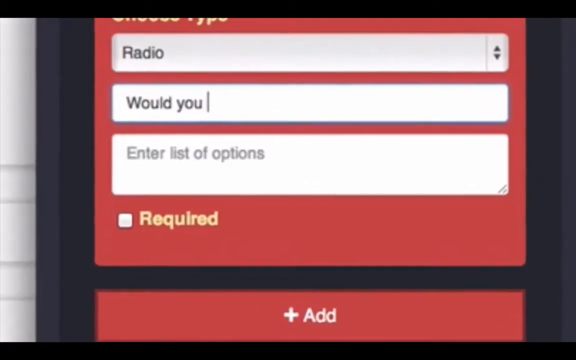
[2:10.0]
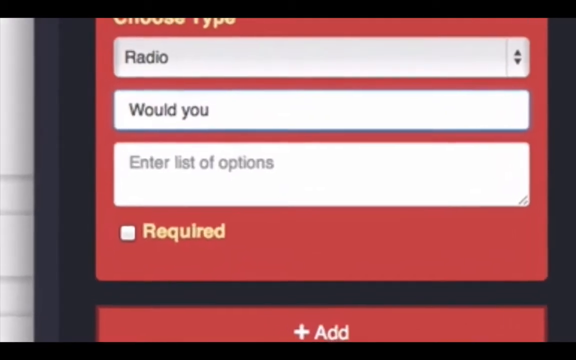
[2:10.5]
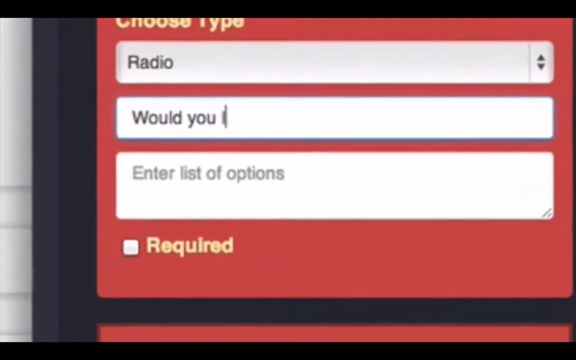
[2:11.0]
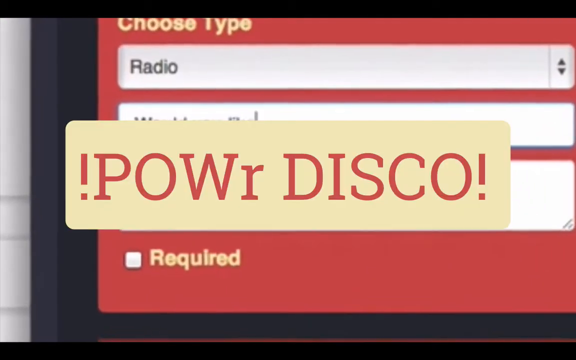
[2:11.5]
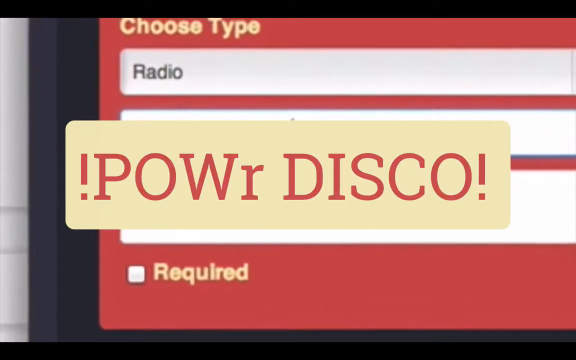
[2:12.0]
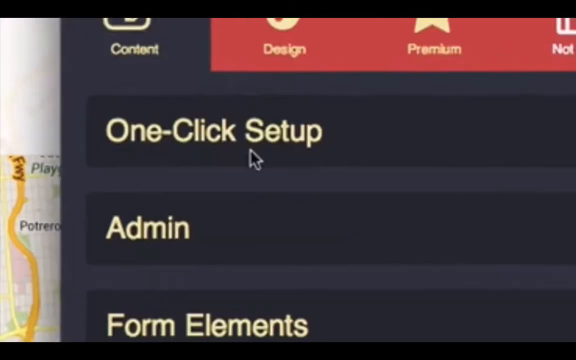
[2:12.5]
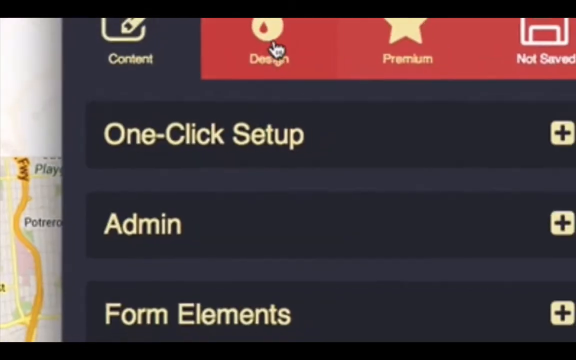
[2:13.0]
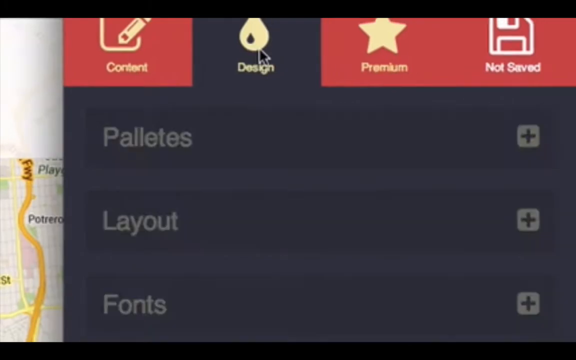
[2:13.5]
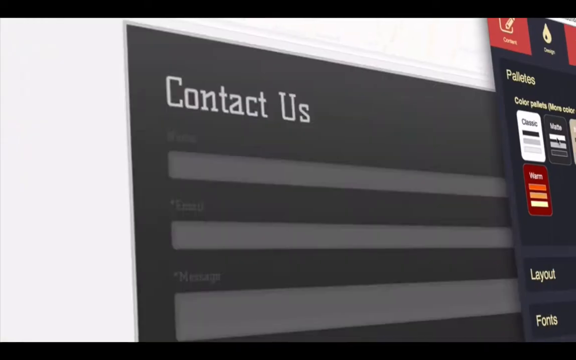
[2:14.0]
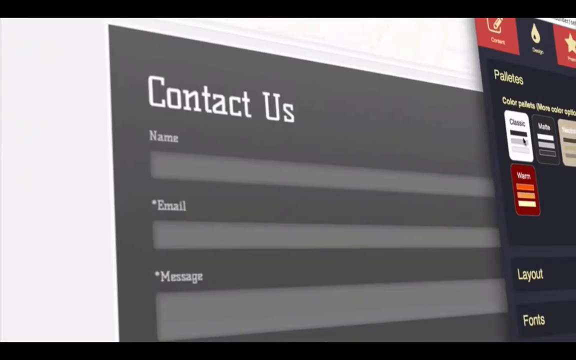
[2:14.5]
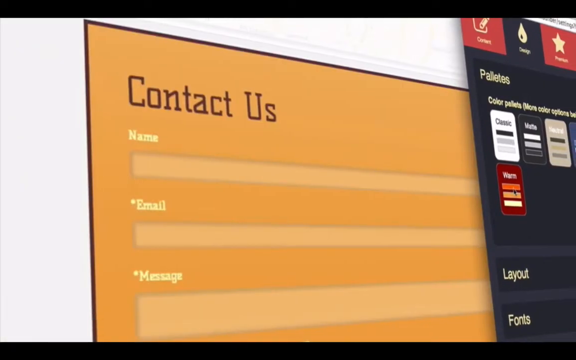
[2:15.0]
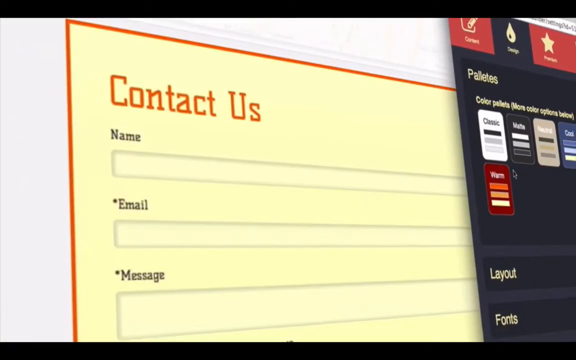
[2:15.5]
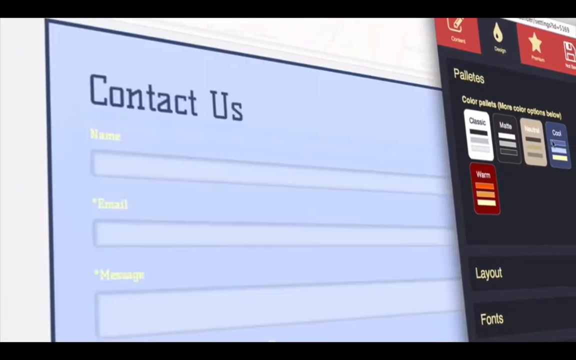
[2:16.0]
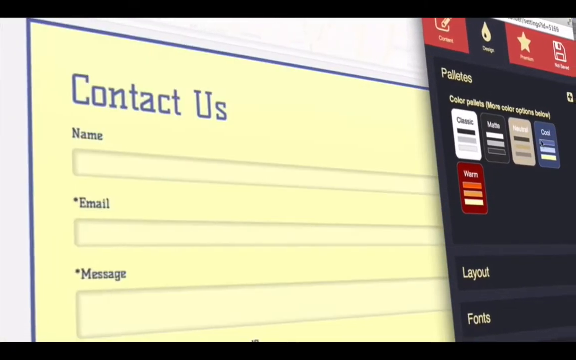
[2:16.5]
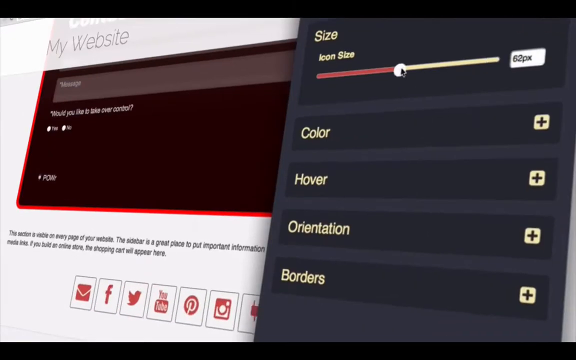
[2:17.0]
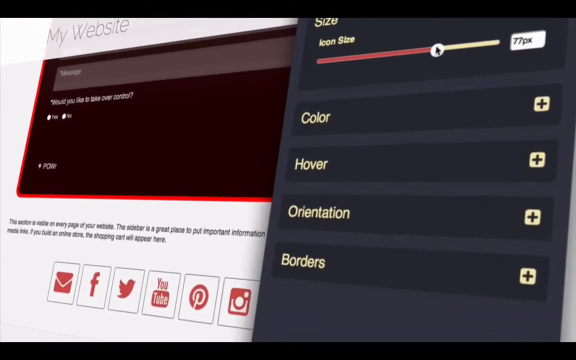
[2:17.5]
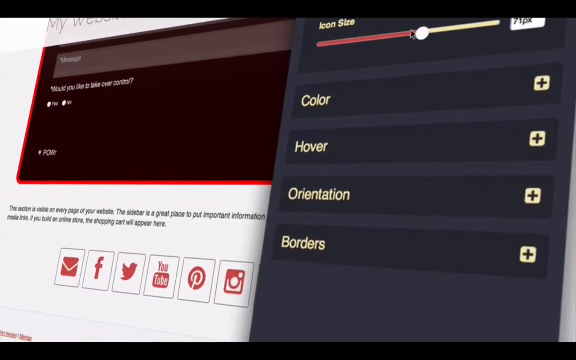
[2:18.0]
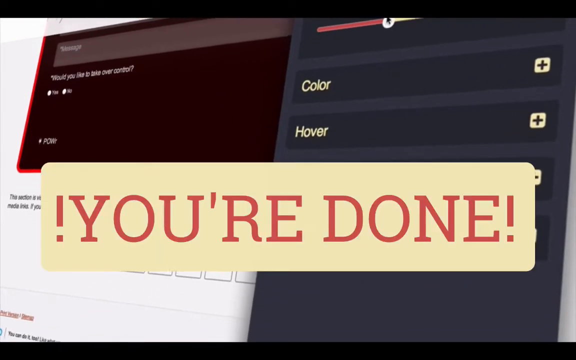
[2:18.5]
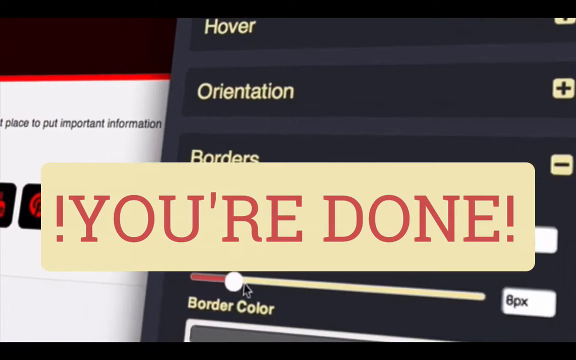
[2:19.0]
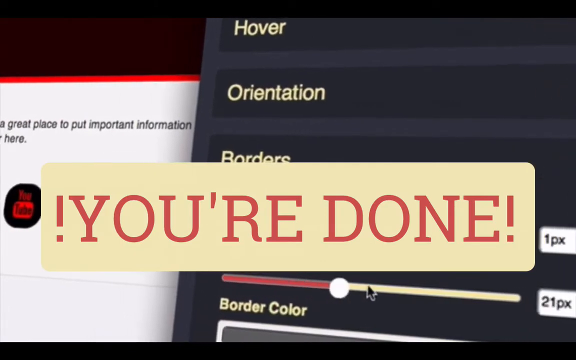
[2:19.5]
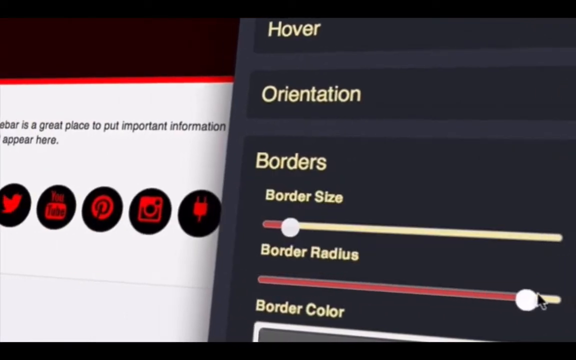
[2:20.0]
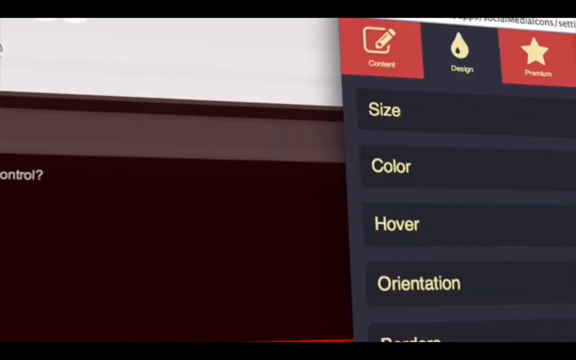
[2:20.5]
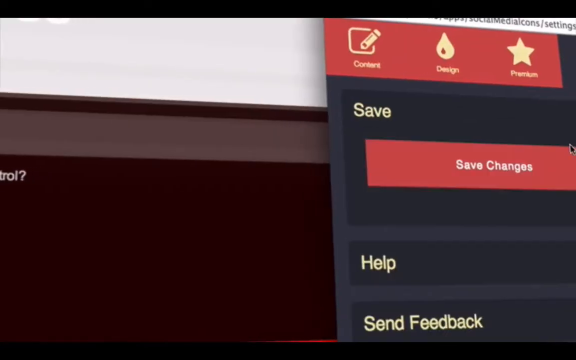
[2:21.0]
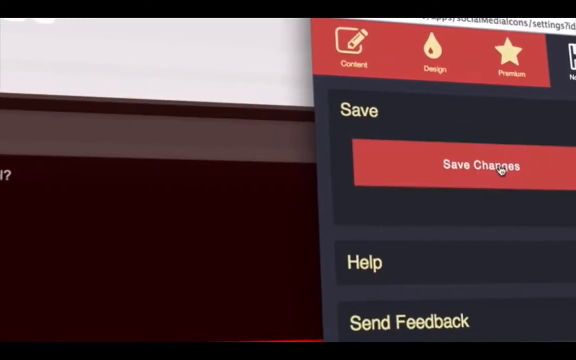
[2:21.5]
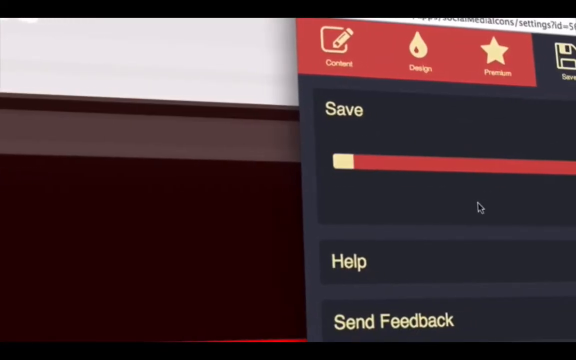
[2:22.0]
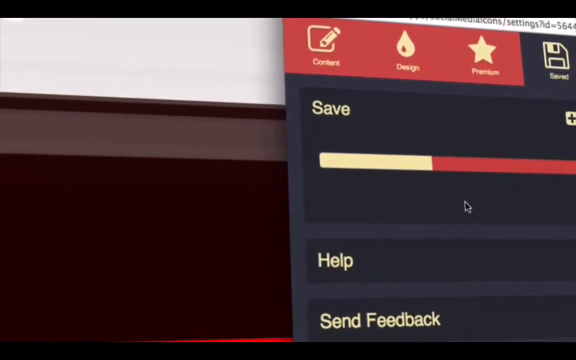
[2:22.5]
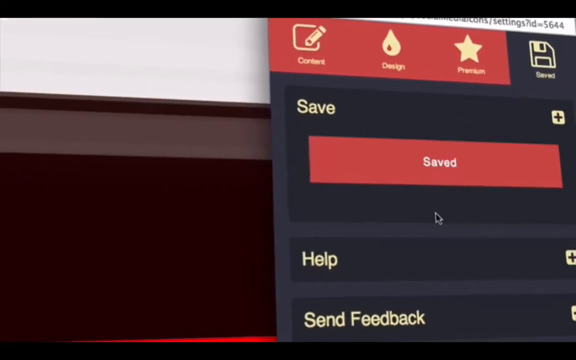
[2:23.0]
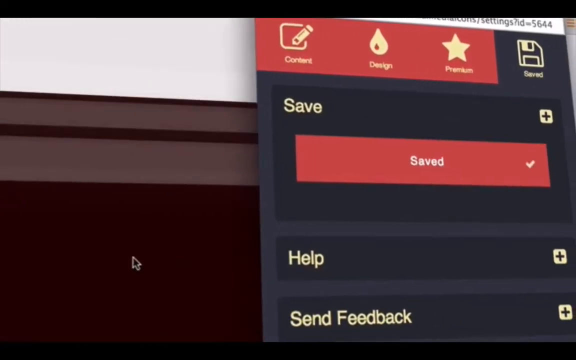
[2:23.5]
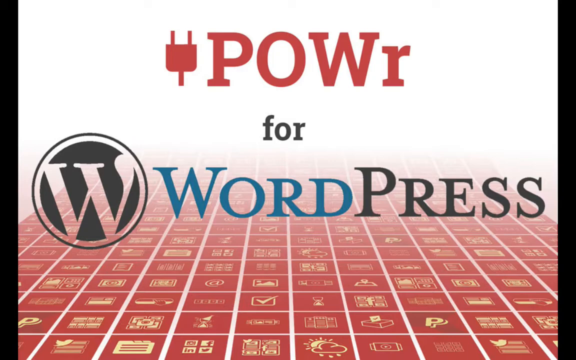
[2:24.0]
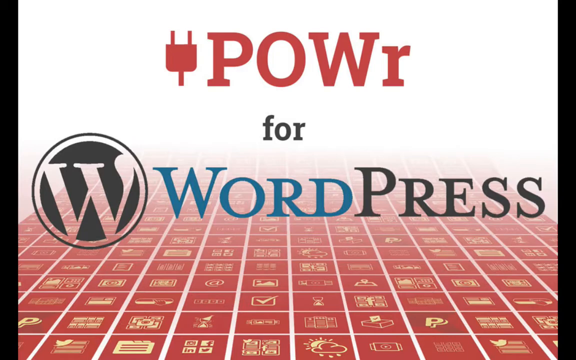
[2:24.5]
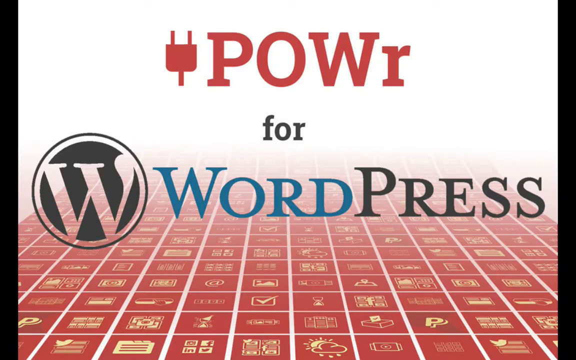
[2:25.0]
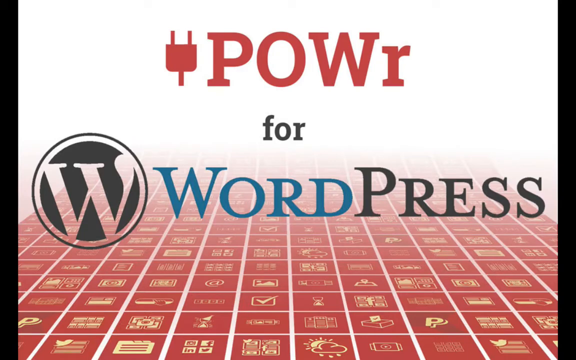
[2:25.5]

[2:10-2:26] Zoomed in on the part that says "Choose Type", the person selects radio and types "would you like". Then big red text on a yellow background across the screen says "Power Disco". The person clicks various other things such as design, changing the color palettes from blue to yellow to red, and tweaking the icon sizes, which makes the icons on the left-hand side go bigger and smaller. Large red text on a yellow background then says "you're done", with exclamation marks at either end. The person continues tweaking the design and content options, then clicks Save Changes. A yellow bar goes across the screen and the outro screen appears, the same as the intro: the Power plug socket logo at the top, smaller gray text underneath, and below that WordPress with the WordPress logo to the left. The bottom of the screen is red with various different logos.